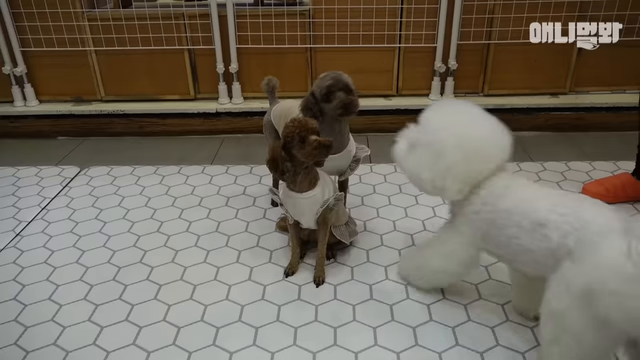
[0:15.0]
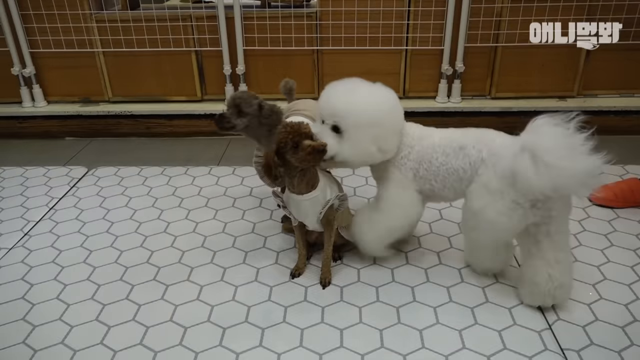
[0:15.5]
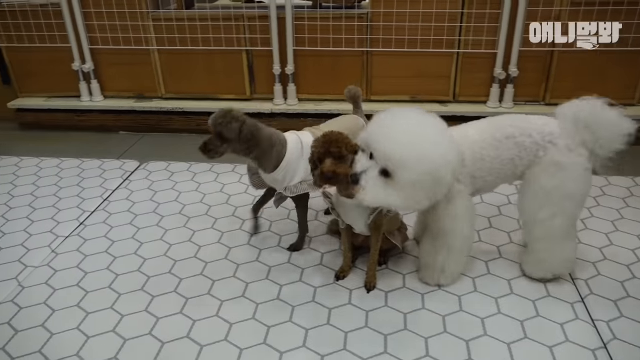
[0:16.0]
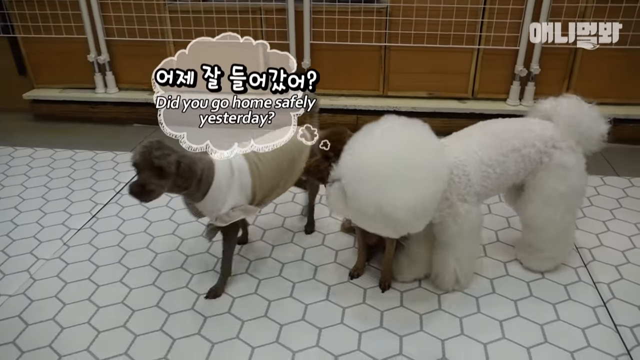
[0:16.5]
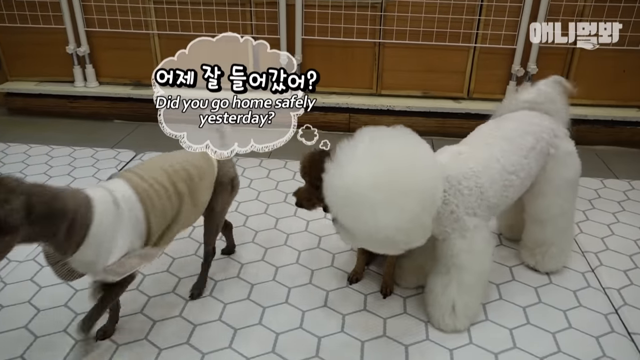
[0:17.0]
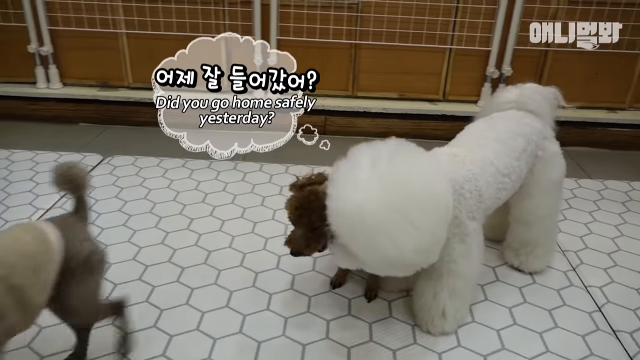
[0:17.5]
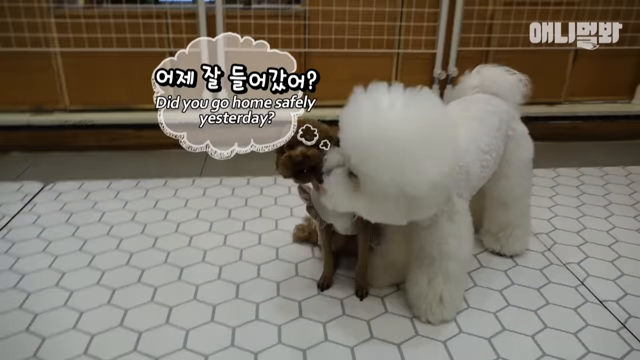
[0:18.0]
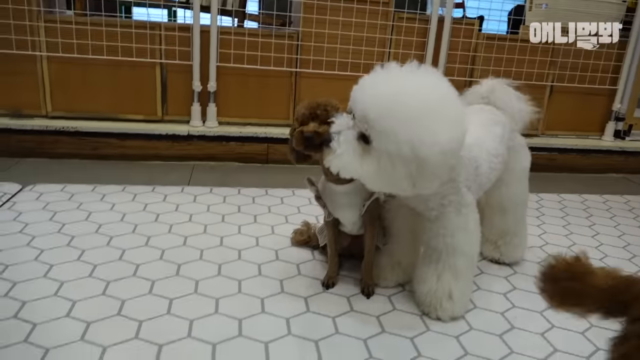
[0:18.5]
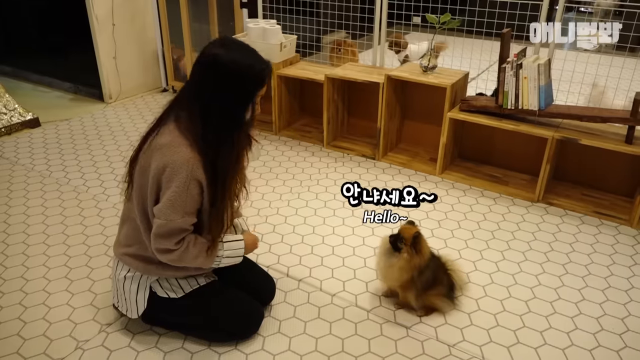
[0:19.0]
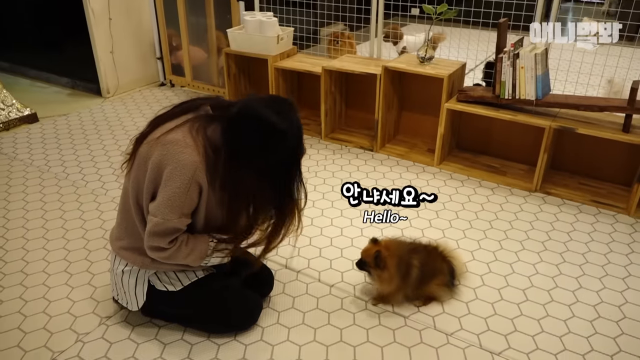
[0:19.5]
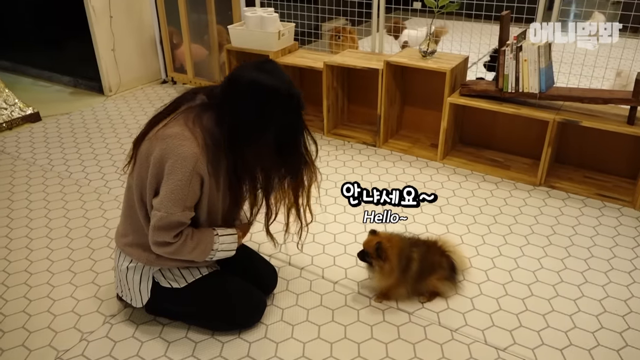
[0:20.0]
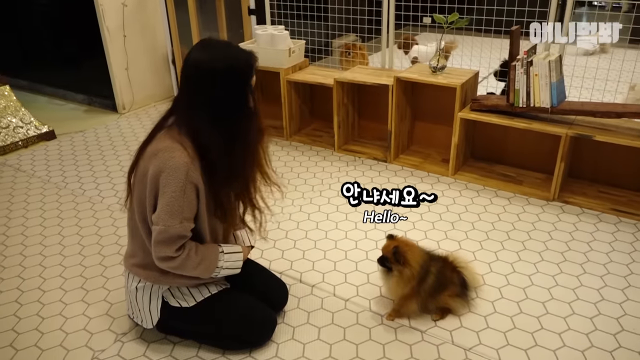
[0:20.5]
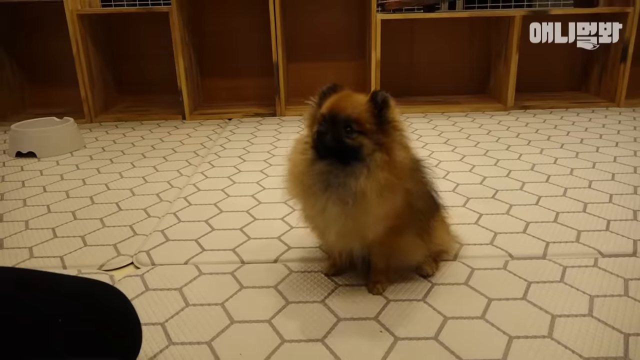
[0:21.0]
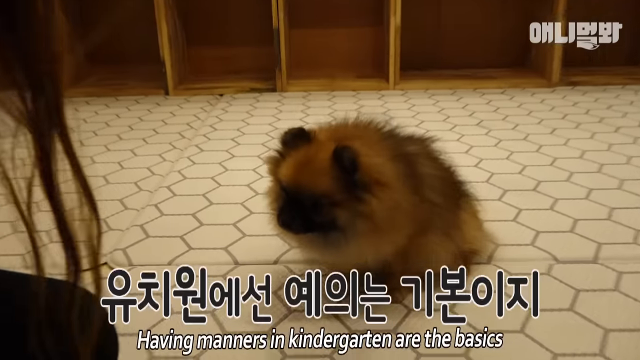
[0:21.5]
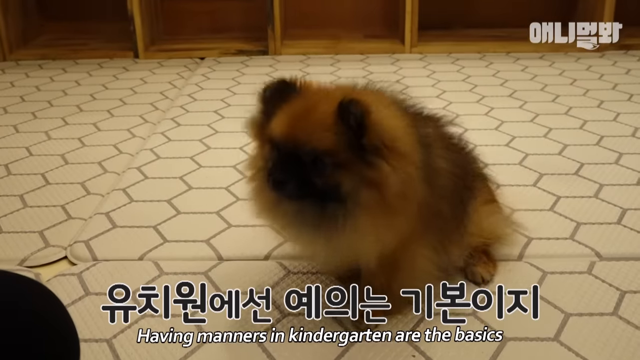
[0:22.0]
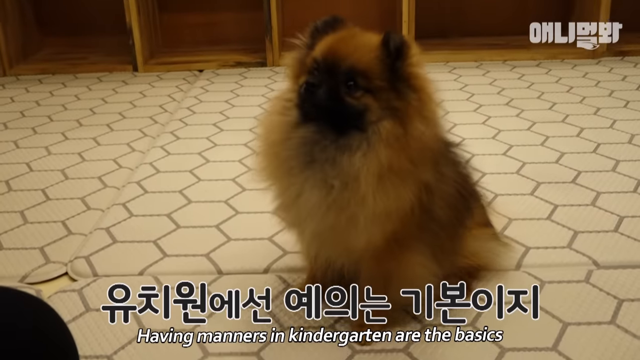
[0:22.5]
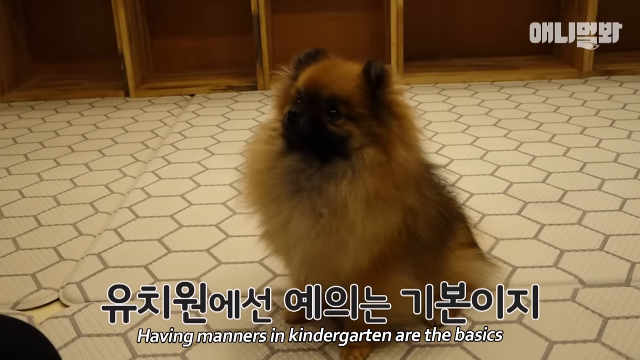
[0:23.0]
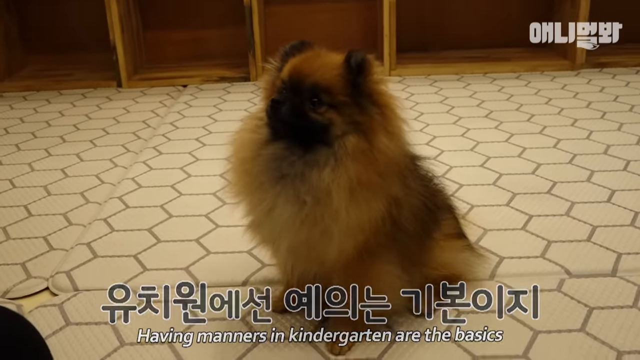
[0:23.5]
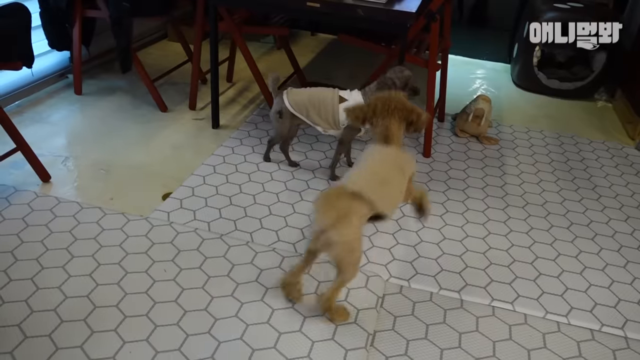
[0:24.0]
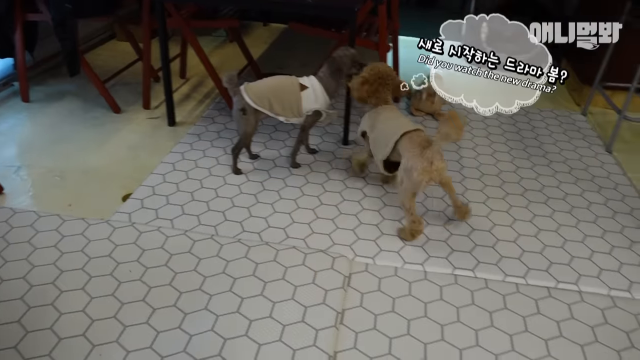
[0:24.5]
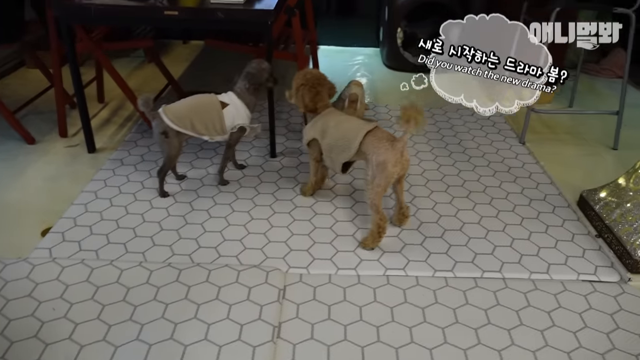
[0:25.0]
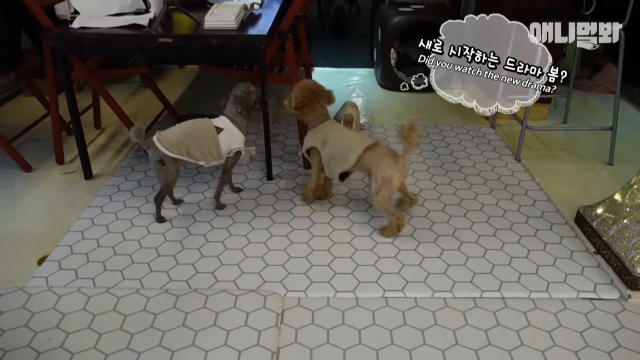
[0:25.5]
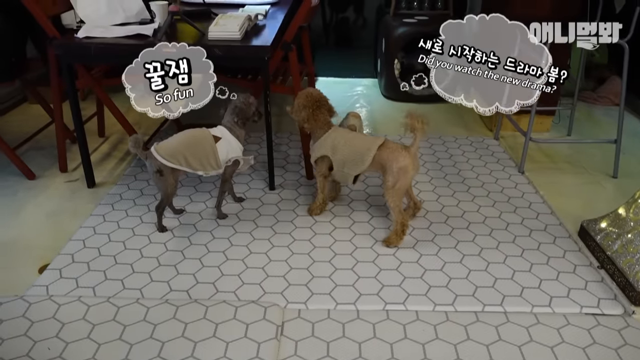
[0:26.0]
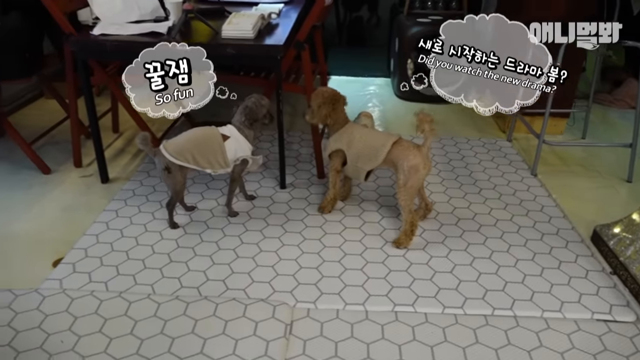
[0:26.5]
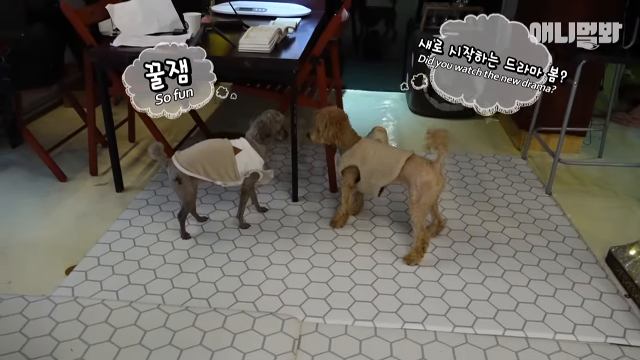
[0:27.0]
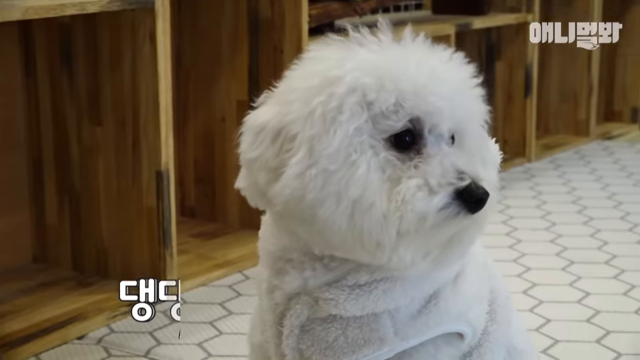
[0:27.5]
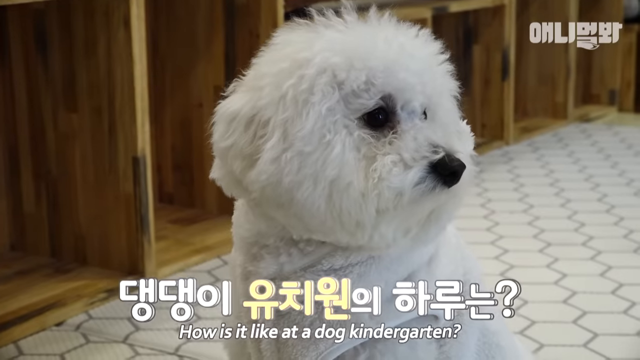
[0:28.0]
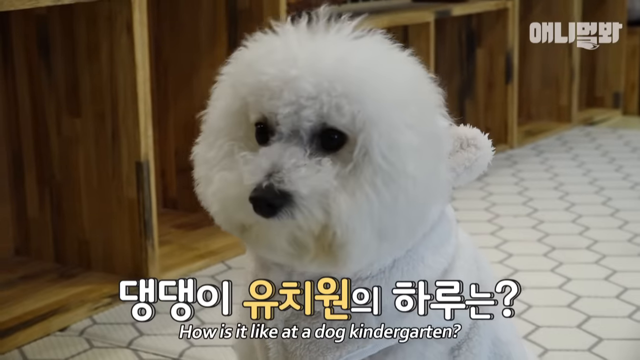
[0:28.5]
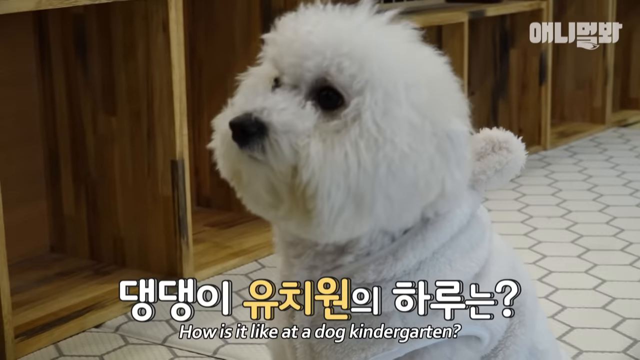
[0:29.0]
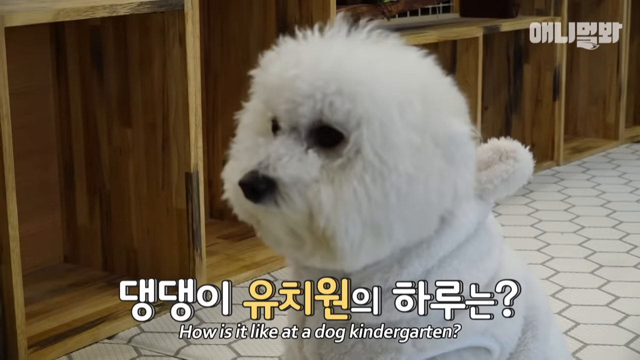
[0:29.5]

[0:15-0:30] A large white fluffy dog starts playing with two smaller dogs, one of which is brown. Next the teacher appears with another group of dogs in front of her. Then the white fluffy dog is shown again; its fur is trimmed except on its head, which is all round and puffy. The teacher is an Asian woman in what looks like some kind of dog kennel or dog school, and she is trying to teach or train the dogs. Little word bubbles appear on screen.